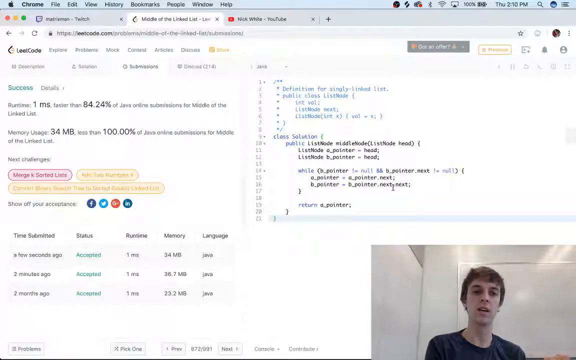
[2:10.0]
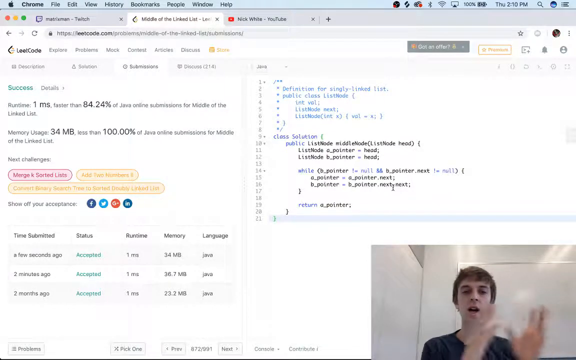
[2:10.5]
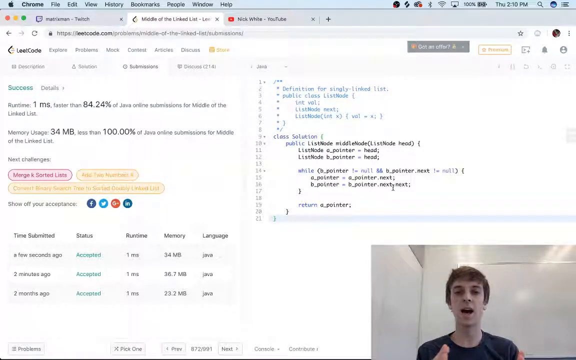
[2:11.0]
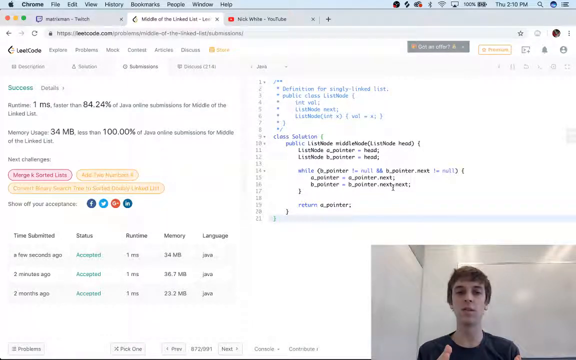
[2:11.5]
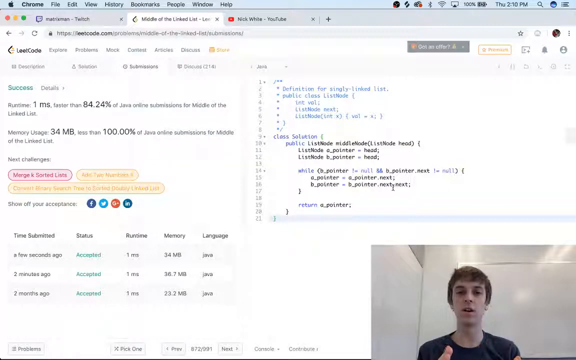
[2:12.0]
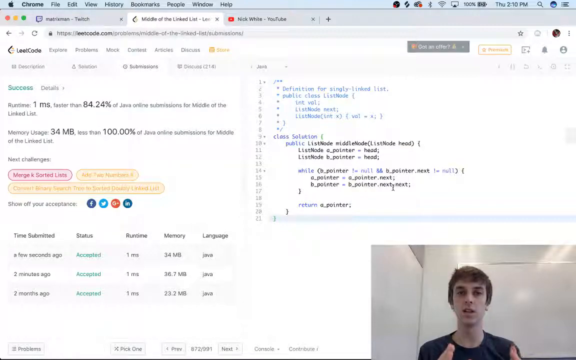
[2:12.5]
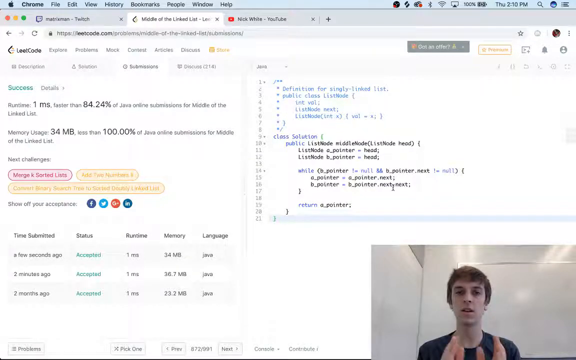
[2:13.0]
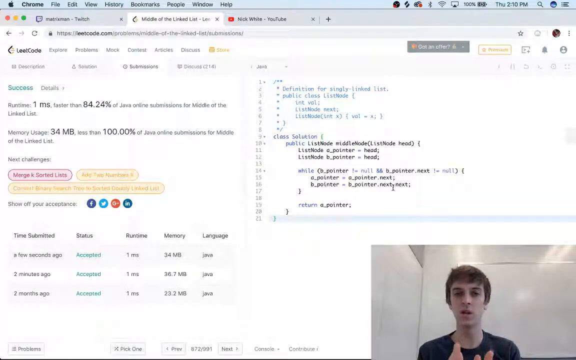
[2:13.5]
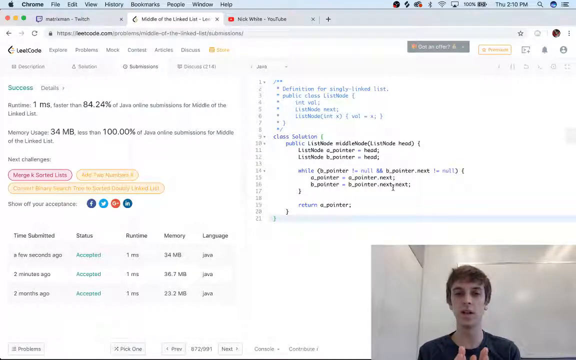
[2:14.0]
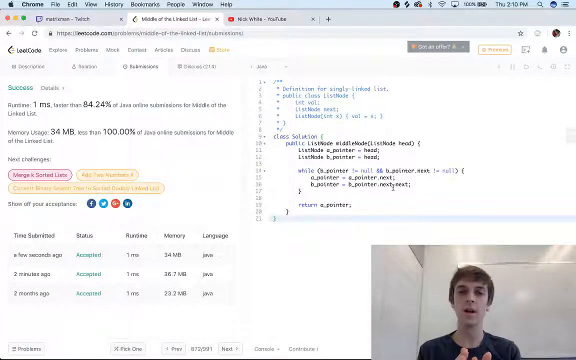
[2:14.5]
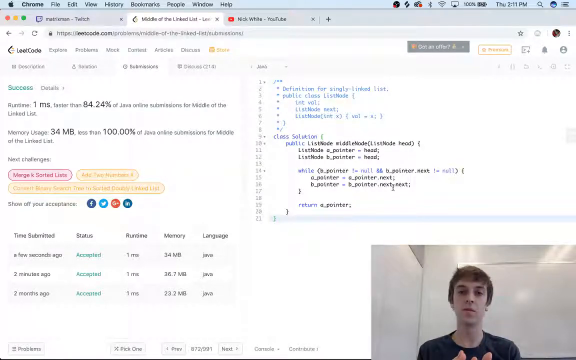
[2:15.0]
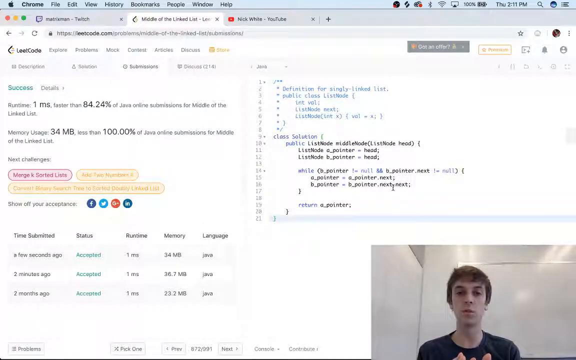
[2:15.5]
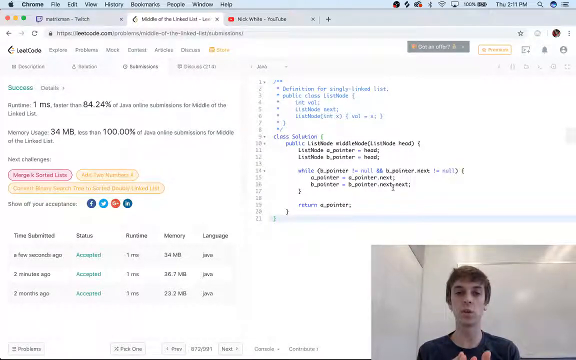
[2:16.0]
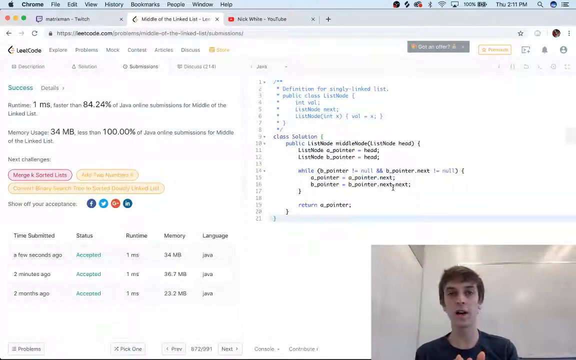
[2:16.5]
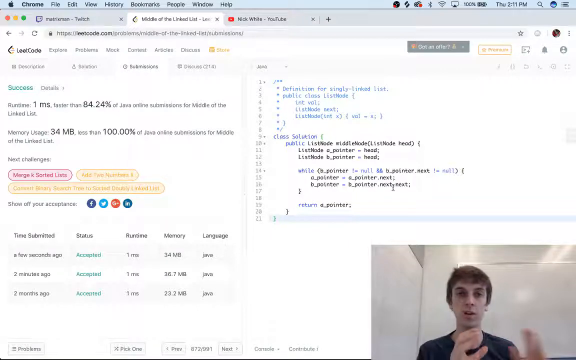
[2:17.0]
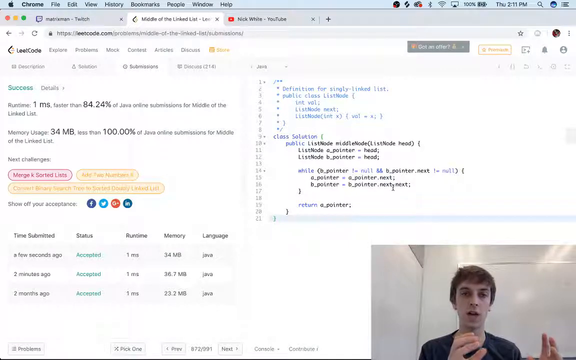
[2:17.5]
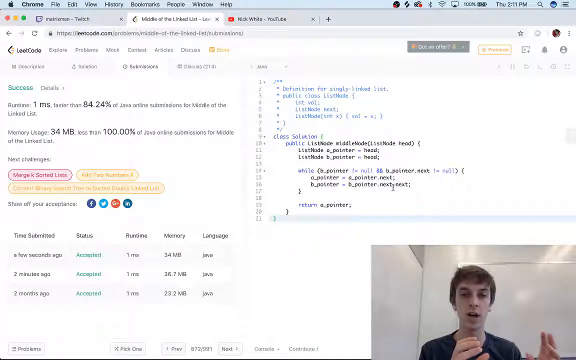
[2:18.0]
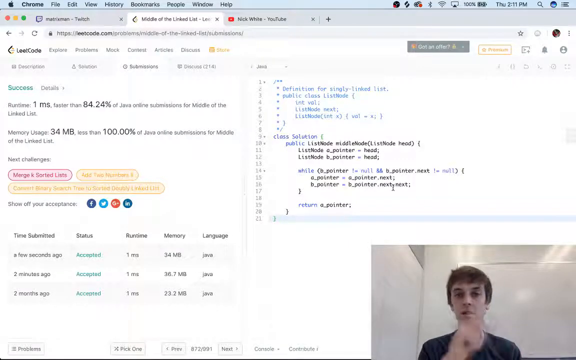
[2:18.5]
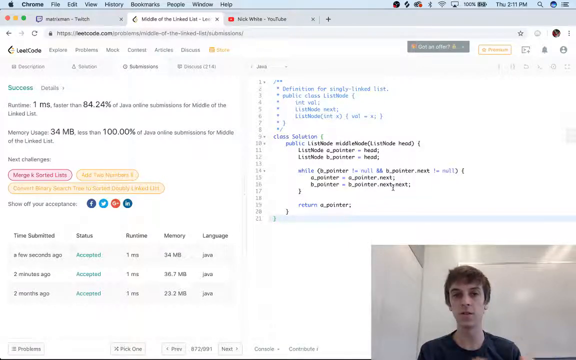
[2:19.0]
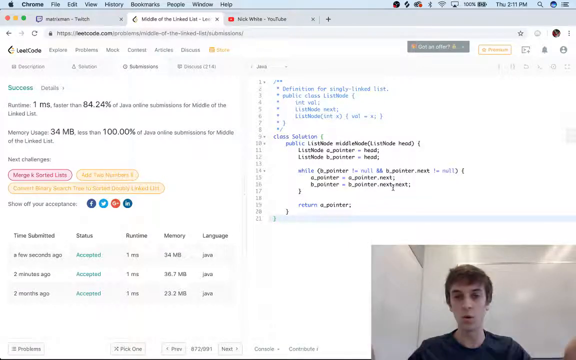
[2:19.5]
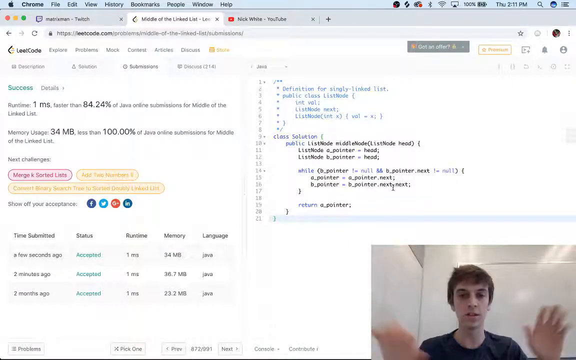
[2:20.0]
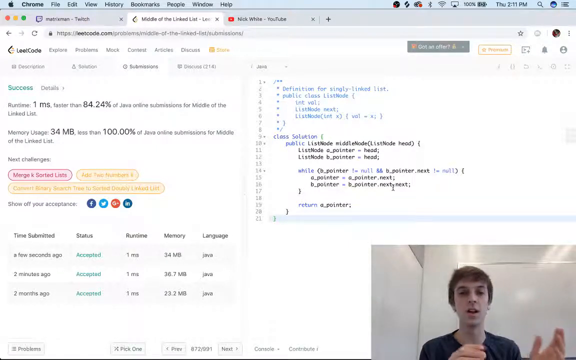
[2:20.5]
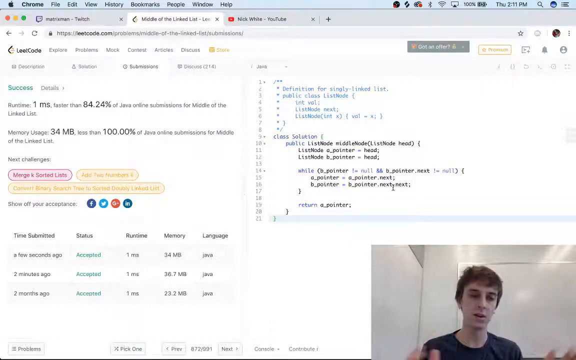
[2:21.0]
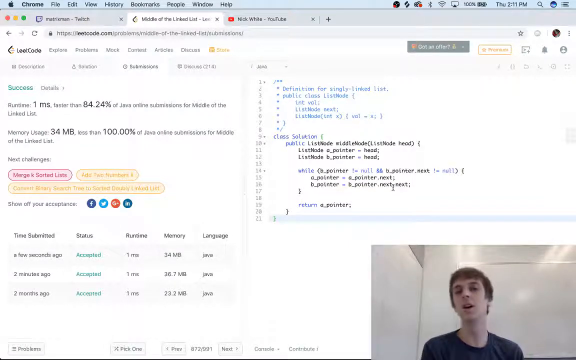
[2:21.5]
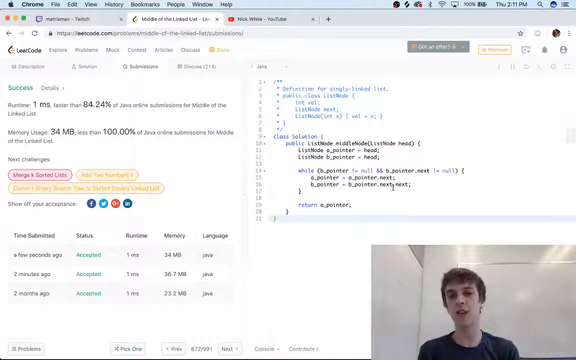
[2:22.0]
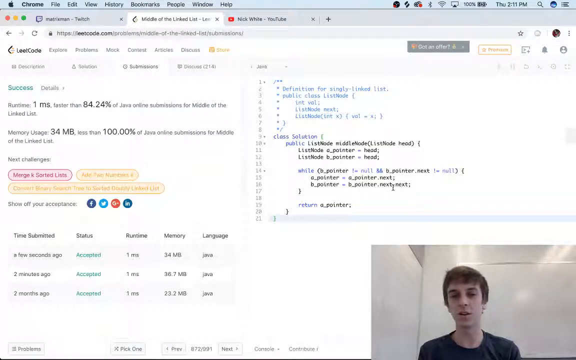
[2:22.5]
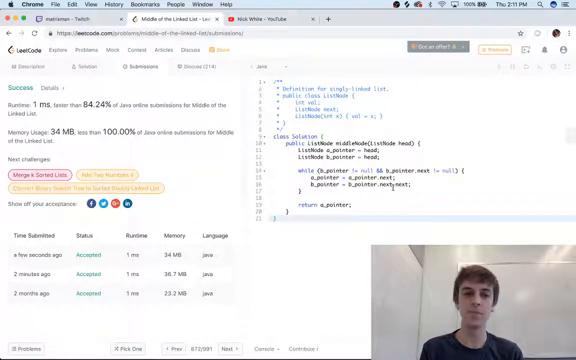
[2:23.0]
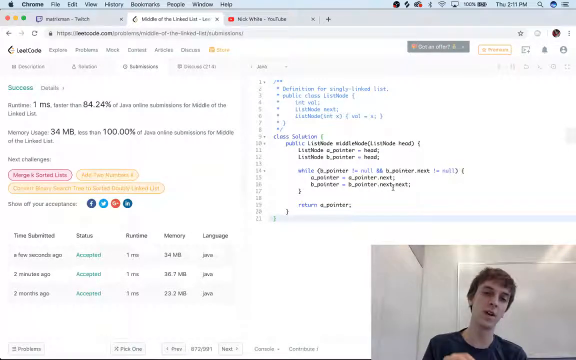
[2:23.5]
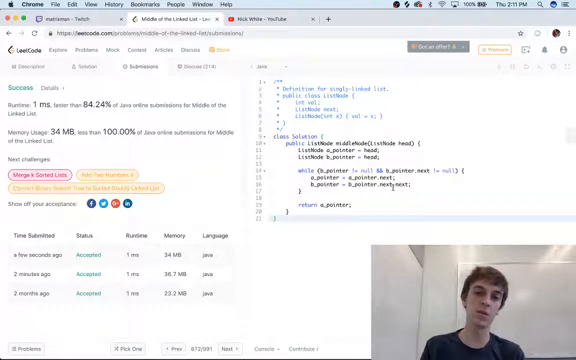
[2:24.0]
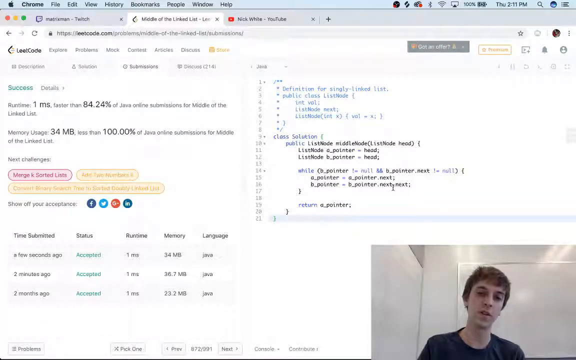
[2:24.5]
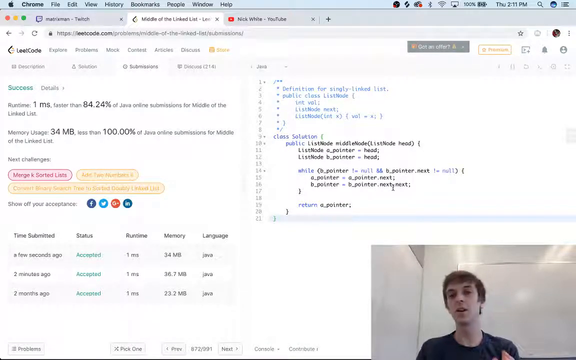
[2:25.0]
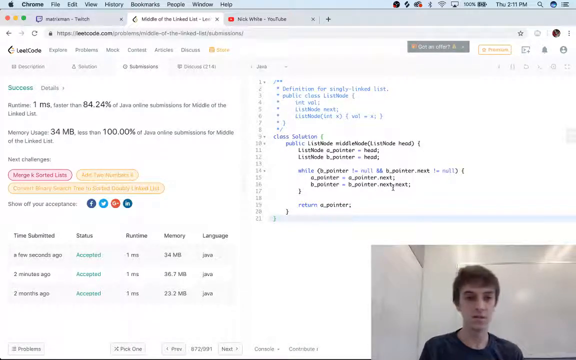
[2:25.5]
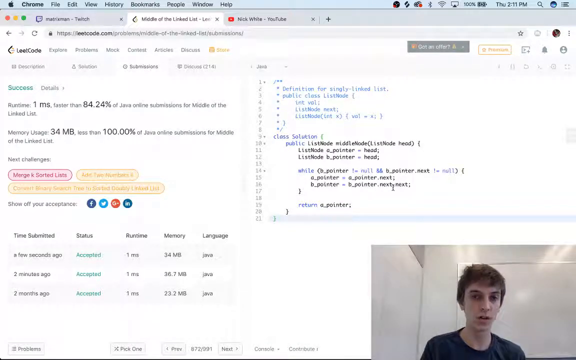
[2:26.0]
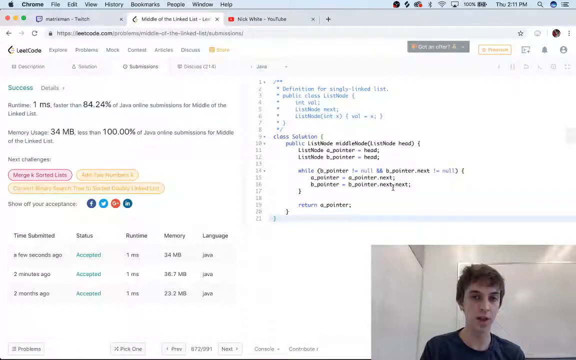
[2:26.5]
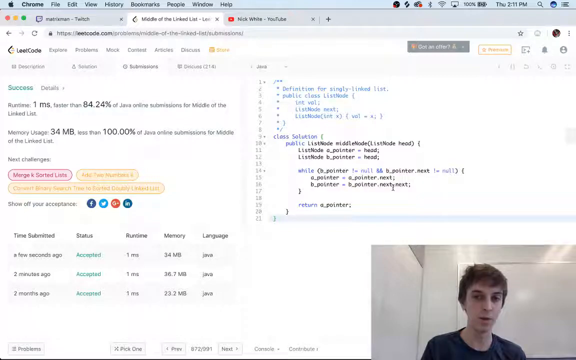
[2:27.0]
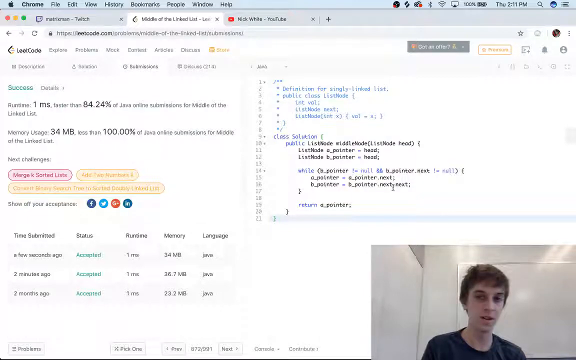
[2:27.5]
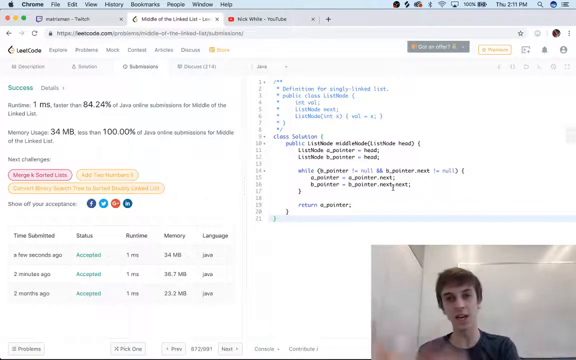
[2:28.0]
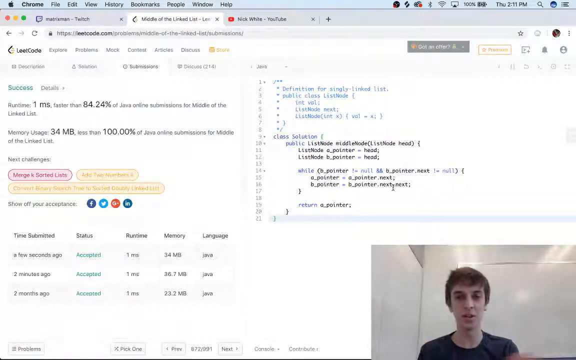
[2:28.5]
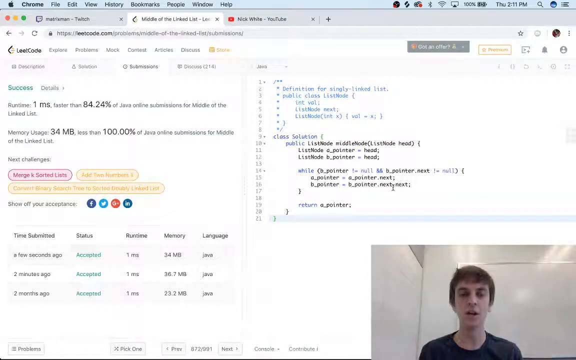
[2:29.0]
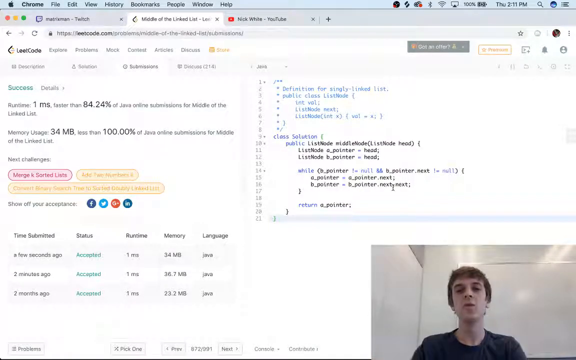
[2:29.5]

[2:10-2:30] The speaker continues using hand motions to demonstrate, bringing his hands from off screen up toward the camera with palms flat and fingers pointed toward the camera. He shakes them for emphasis, brings his hands closer together, switches to a cupping motion, spreads them out, then raises one finger up to his head. He then wipes both hands away as if wiping something away, and goes back to moving his hands for emphasis rather than to illustrate. He makes strong eye contact with the camera, then begins illustrating with his hands again, moving both hands from the center of the screen toward the left side. He wears a dark gray or dark blue shirt that makes his hands and hand symbols stand out by contrast. He is very animated.